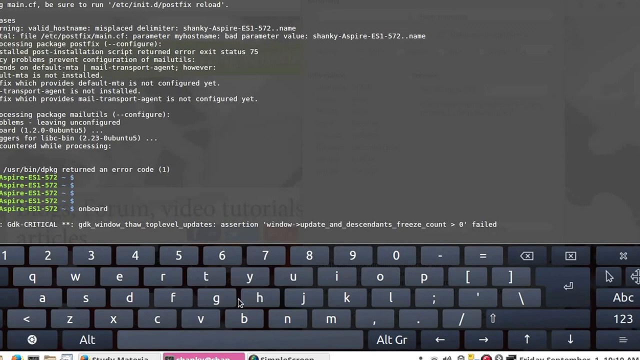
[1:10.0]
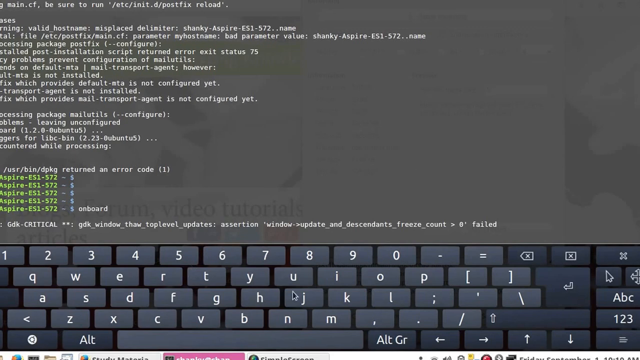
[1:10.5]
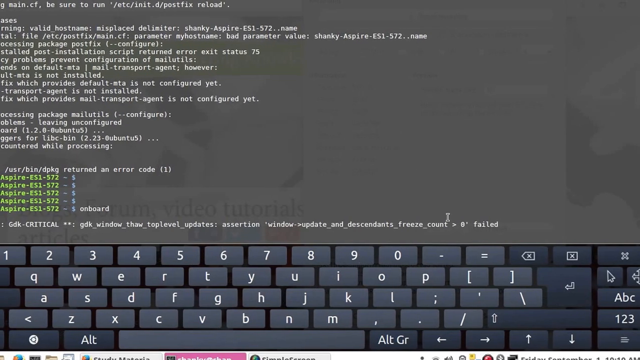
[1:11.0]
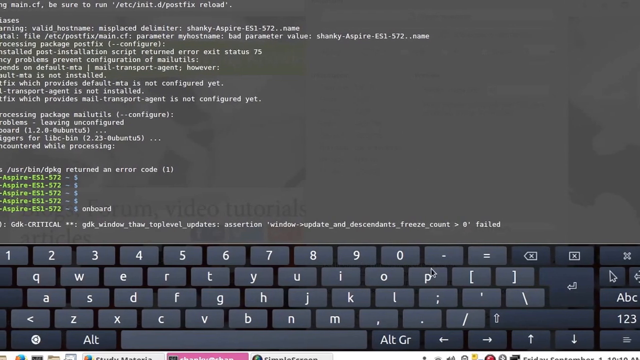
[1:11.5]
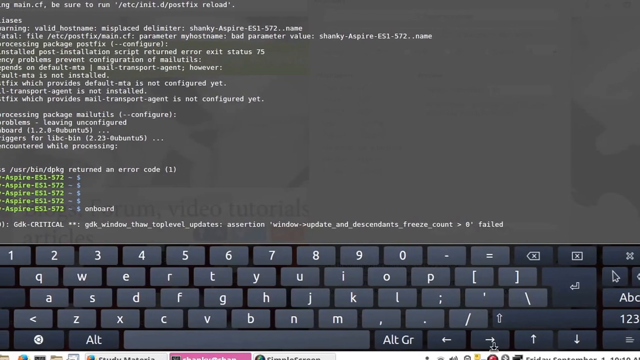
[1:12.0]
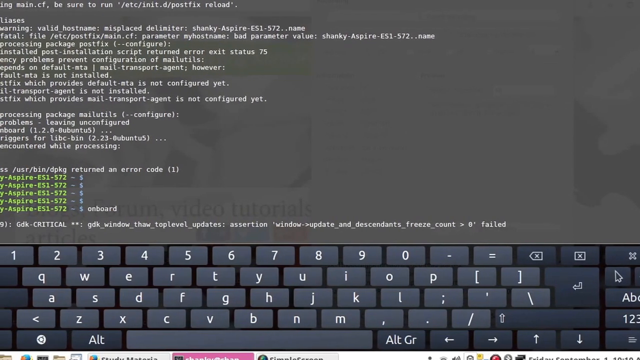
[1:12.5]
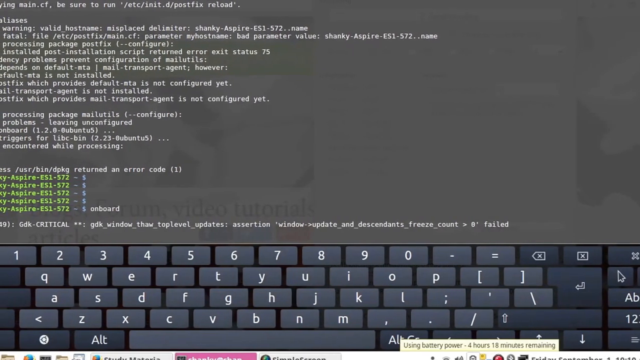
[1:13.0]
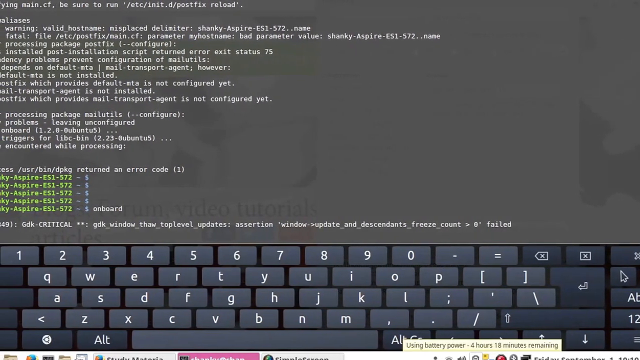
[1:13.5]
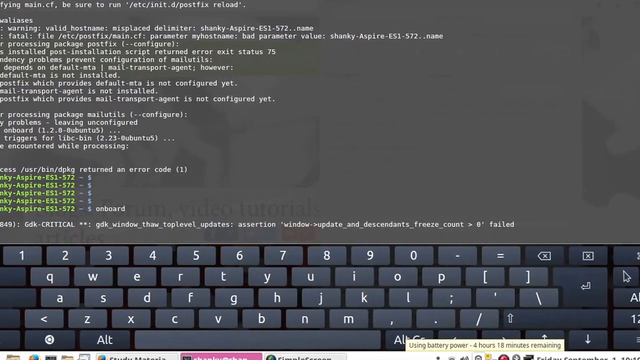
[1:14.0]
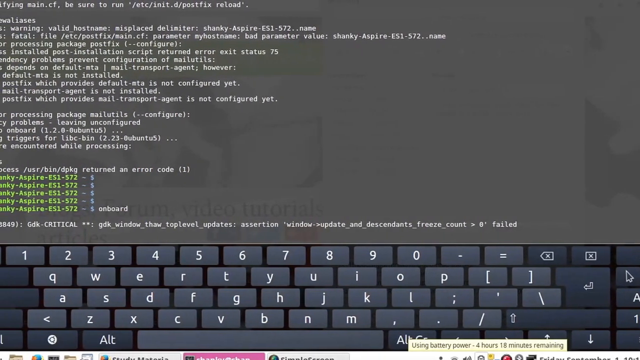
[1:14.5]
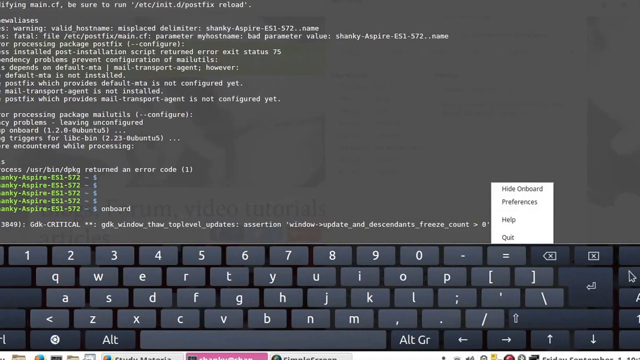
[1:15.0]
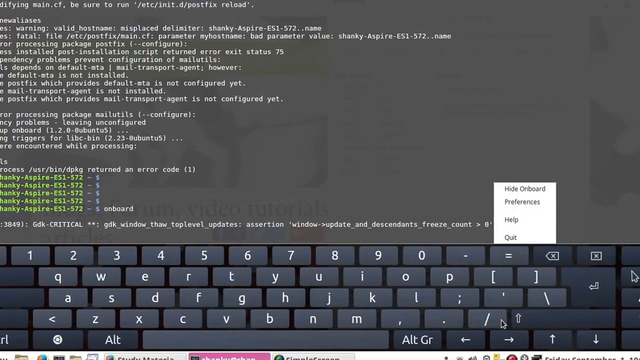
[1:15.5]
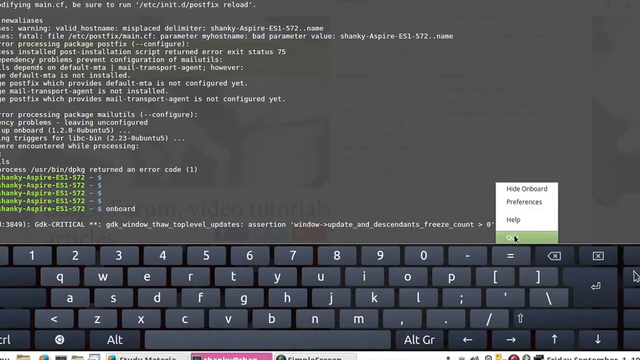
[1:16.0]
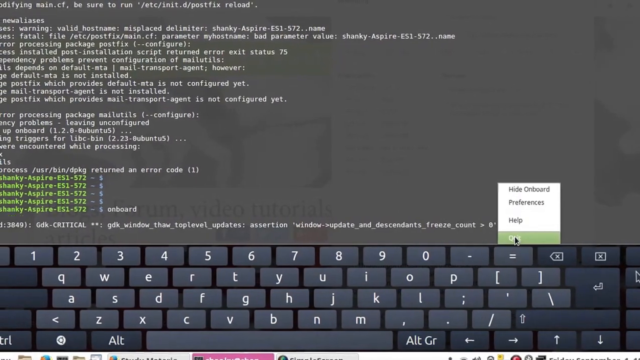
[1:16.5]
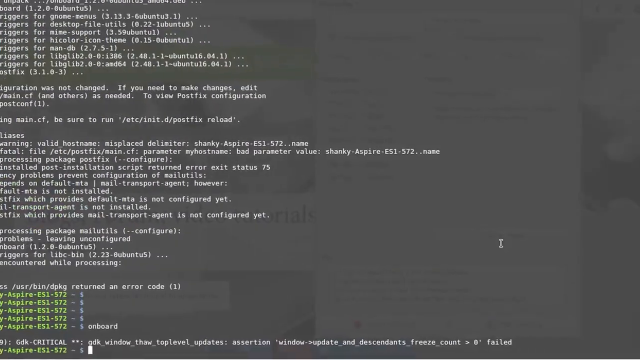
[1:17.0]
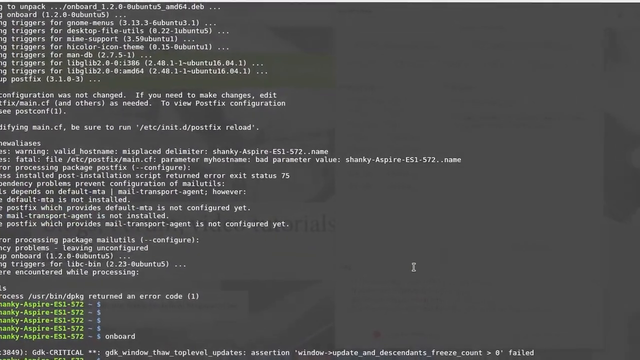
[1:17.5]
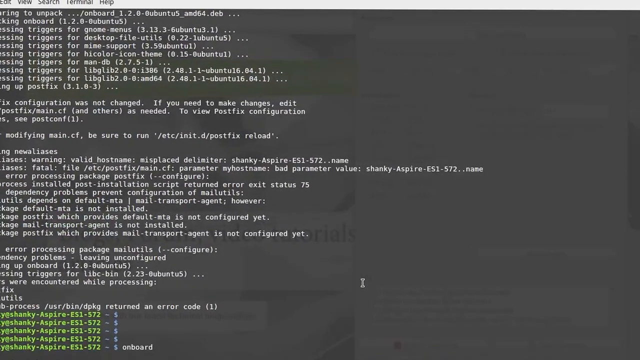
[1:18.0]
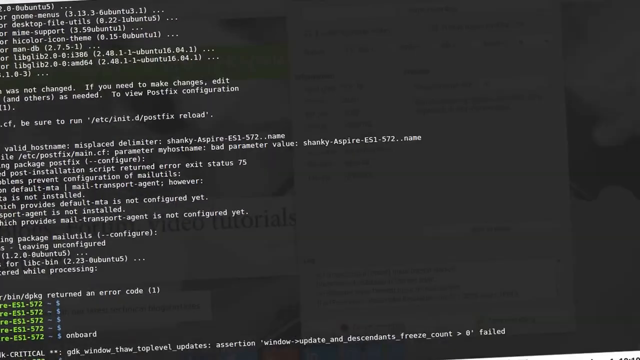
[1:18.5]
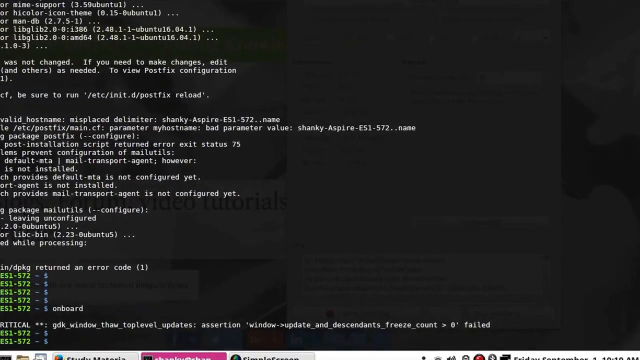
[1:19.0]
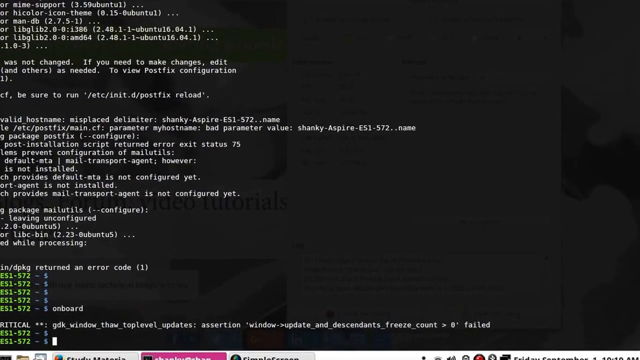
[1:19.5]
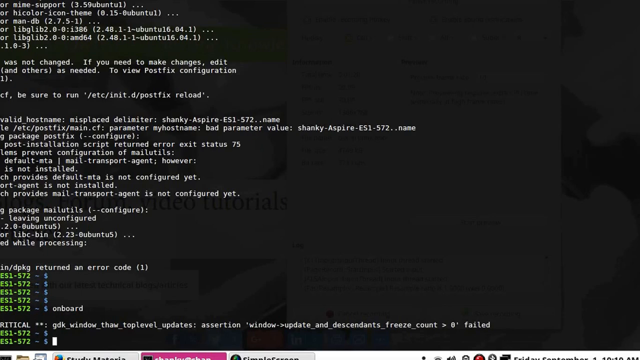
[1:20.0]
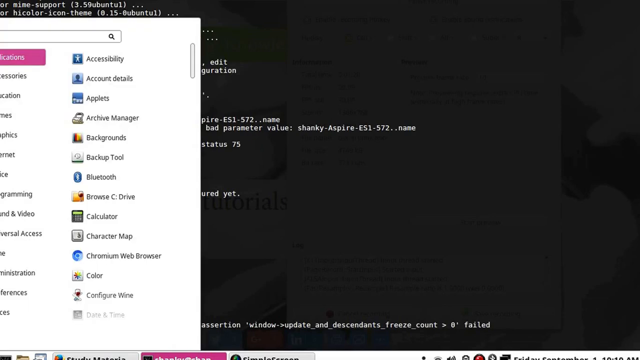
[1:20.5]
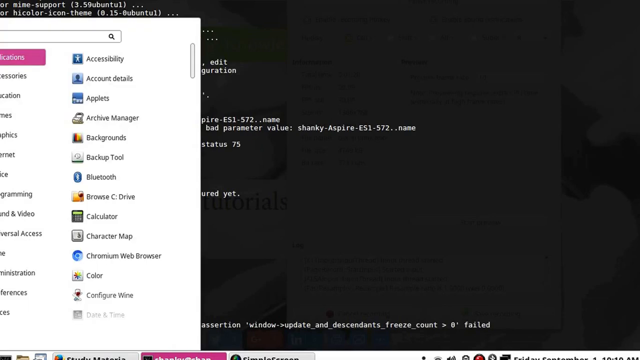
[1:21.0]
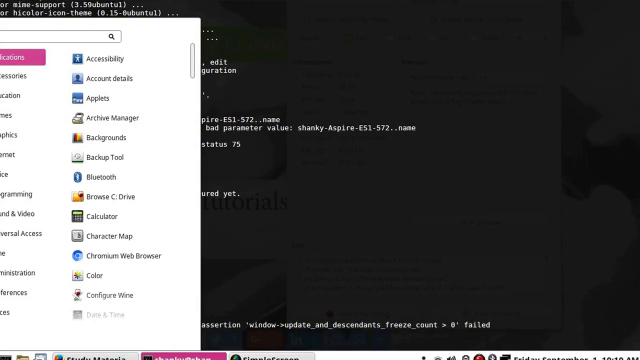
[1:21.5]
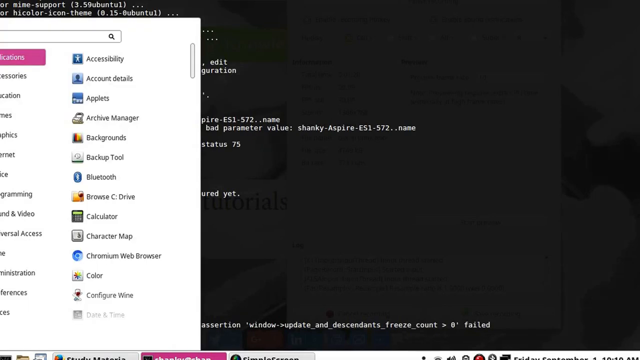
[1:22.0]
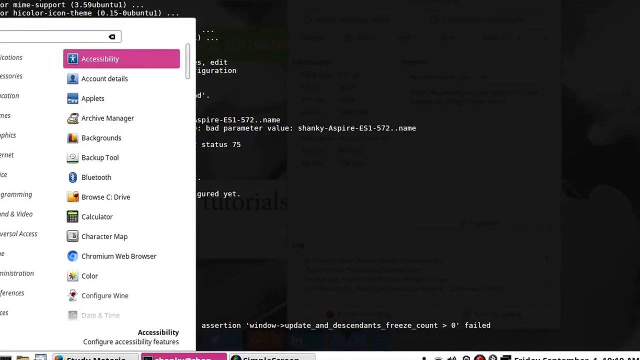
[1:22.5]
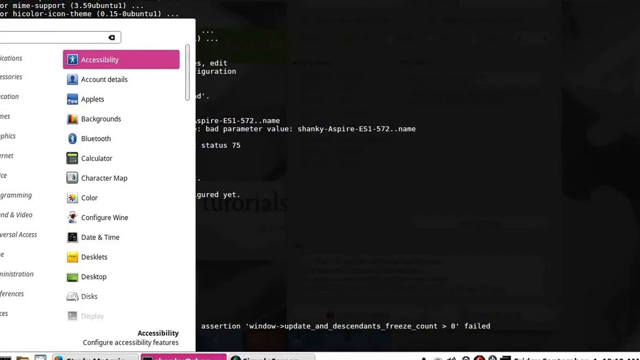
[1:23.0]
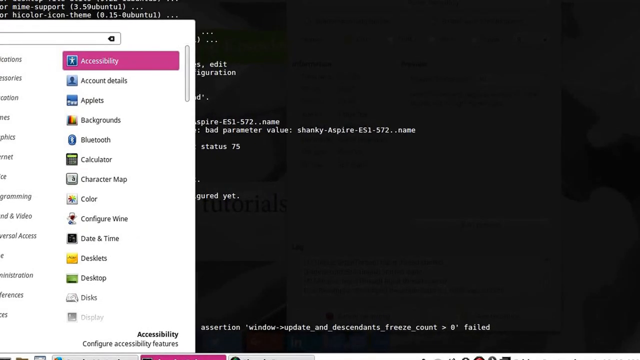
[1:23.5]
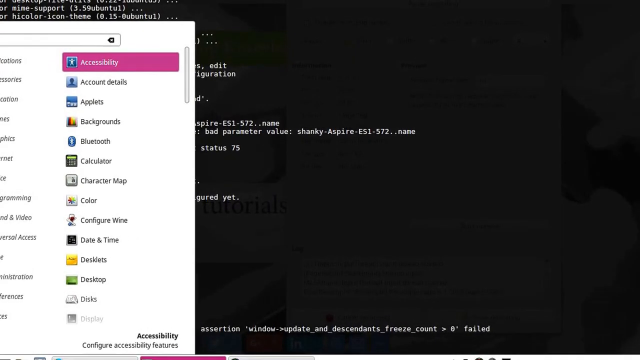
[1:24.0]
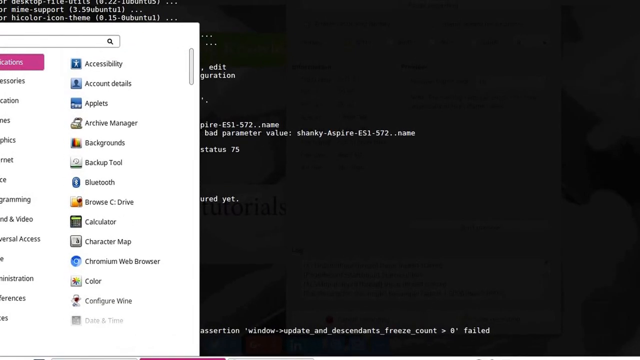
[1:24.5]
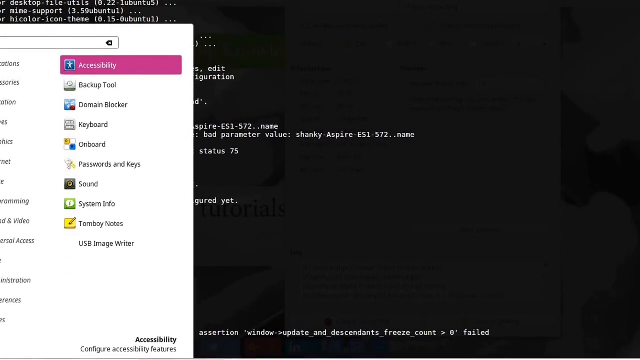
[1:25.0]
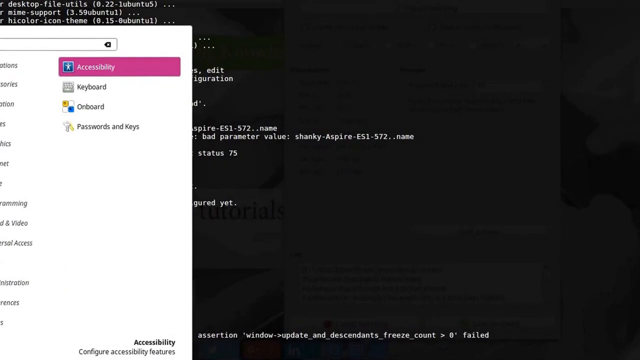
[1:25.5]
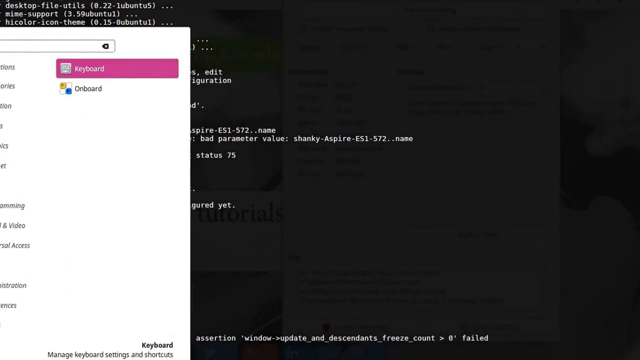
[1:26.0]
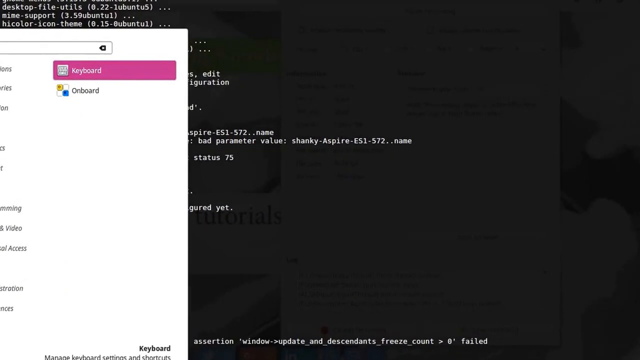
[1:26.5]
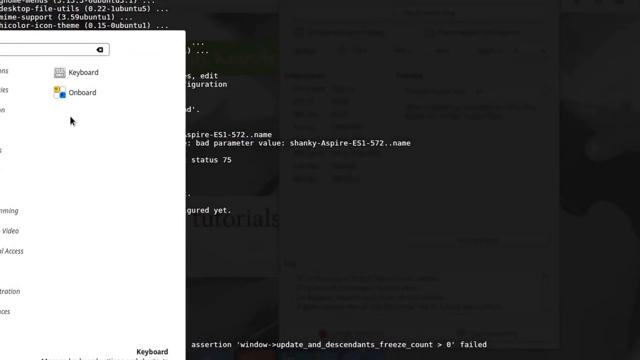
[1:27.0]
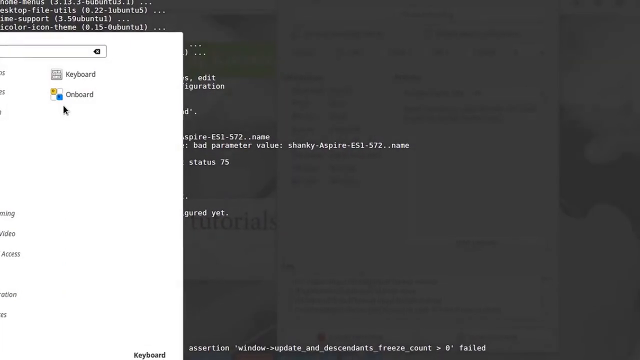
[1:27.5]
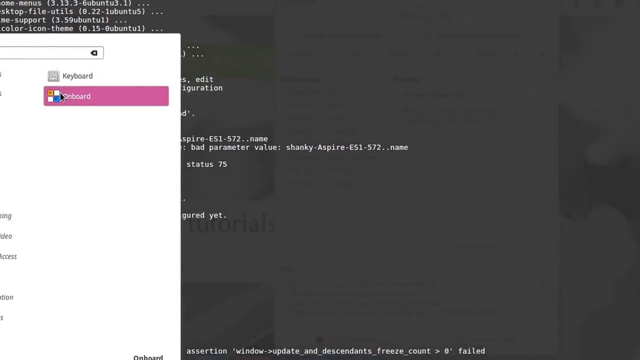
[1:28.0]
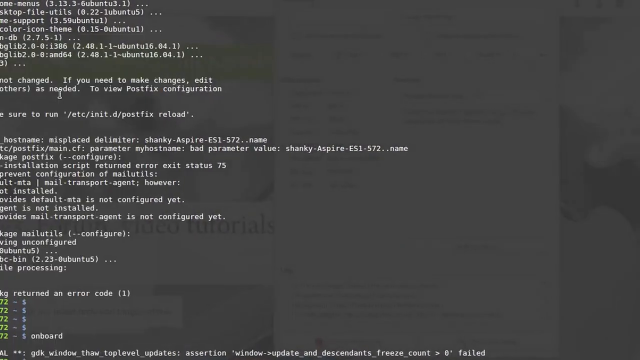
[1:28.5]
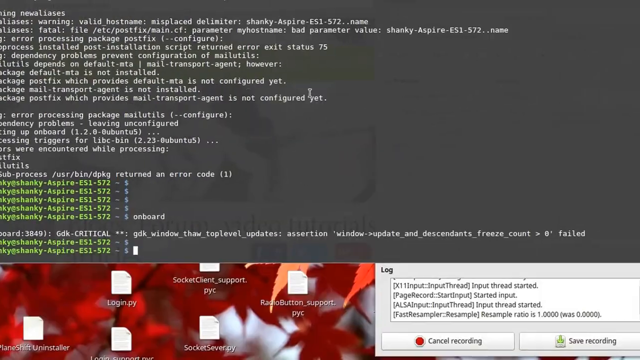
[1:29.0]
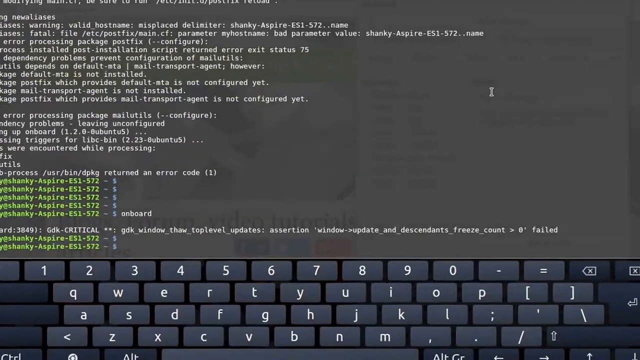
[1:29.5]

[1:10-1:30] A faded web page is behind the text, and the background is mostly gunmetal gray. A keyboard is in the lower third of the screen. White computer programming text, mostly illegible, runs along and down the left-hand side of the screen. The green text reappears: "aspire-es1-572-$" is repeated seven times, and then "on board" is repeated. The mouse jumps and moves to the bottom of the screen, clicks, and a white window pops up. A button is highlighted in green and clicked. The screen moves up and to the left to show more of the programming prompts. Then a white window appears on the left side with various items, including "accessibility," "account details," "Archive Manager," "Backgrounds," "Backup Tool," "Bluetooth," and "Calculator"; some of them are illegible. The mouse moves across it and clicks on Accessibility, which is then highlighted in pink. "Keyboard" and "Onboard" then appear on the background, and Onboard is highlighted in pink. The screen flashes a piece of a web page.